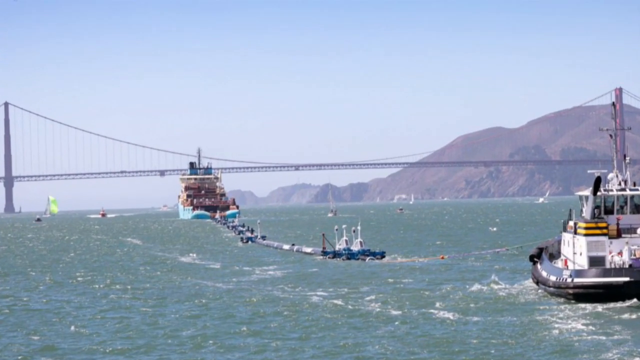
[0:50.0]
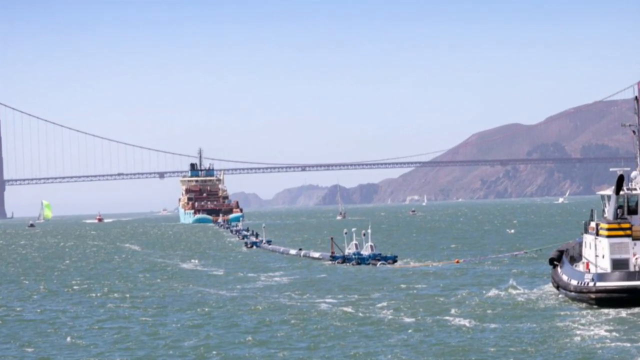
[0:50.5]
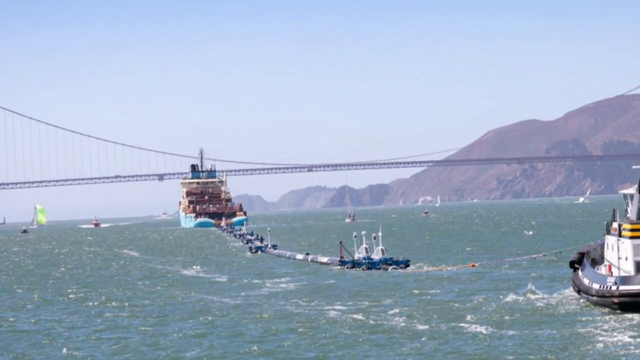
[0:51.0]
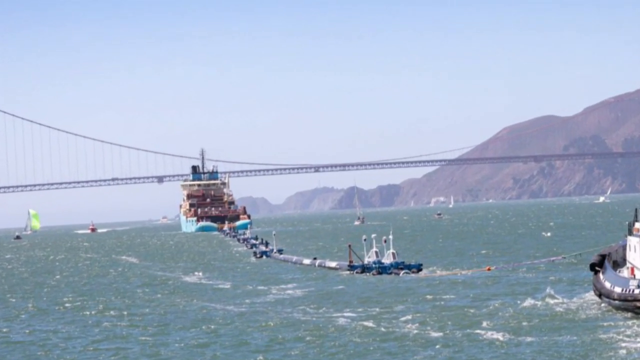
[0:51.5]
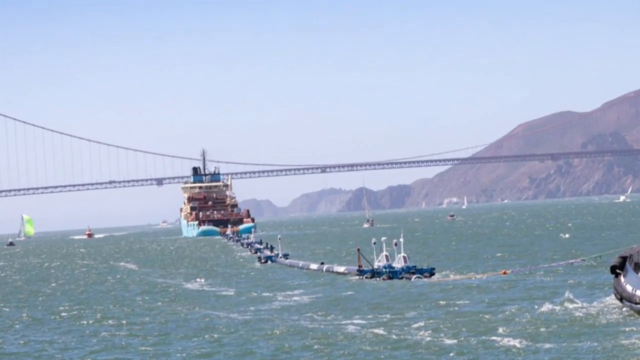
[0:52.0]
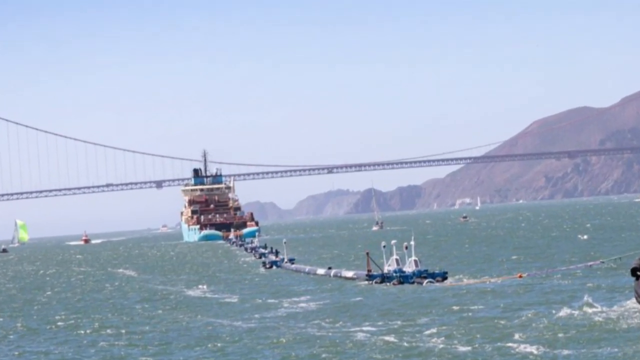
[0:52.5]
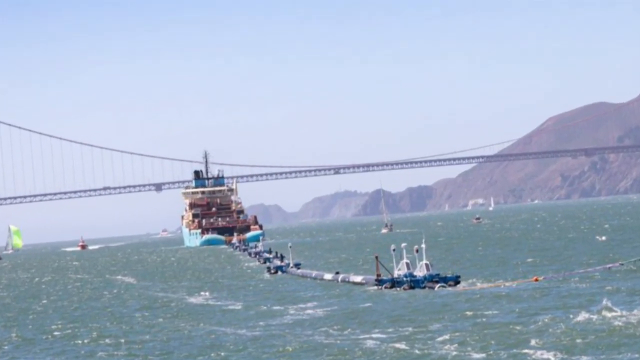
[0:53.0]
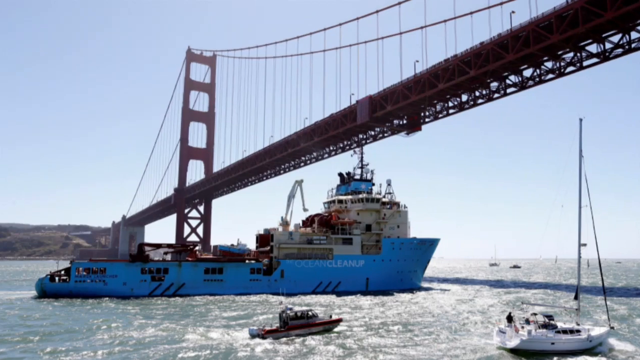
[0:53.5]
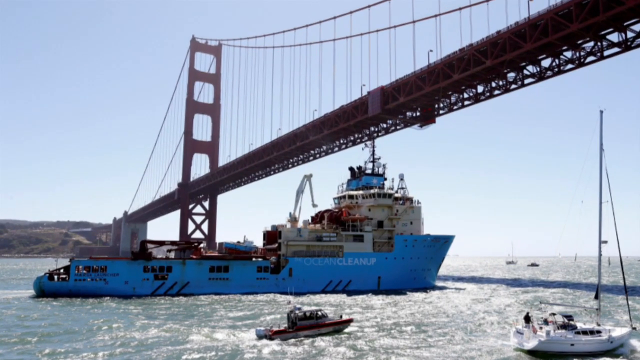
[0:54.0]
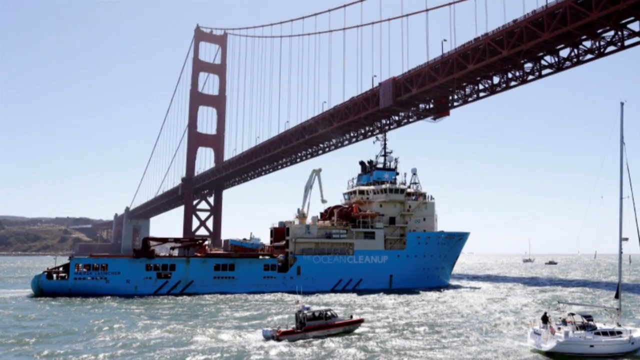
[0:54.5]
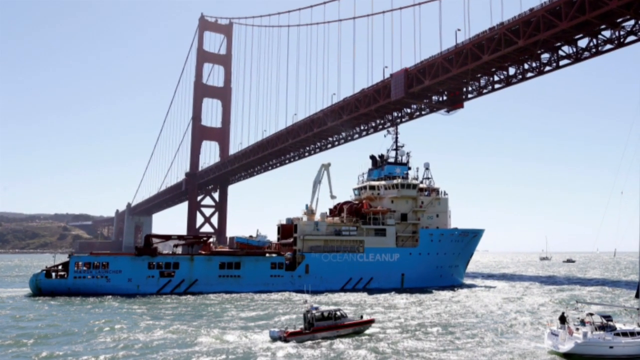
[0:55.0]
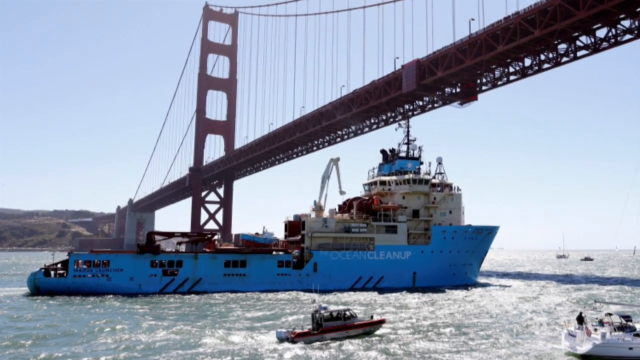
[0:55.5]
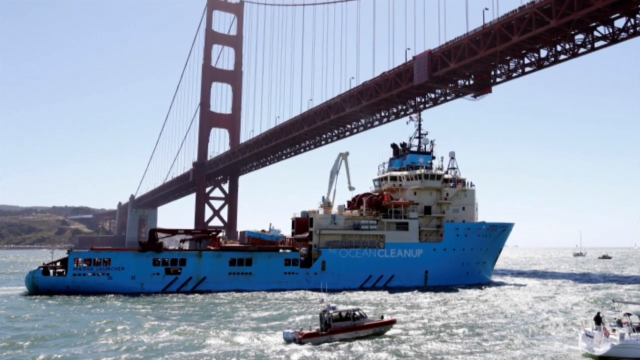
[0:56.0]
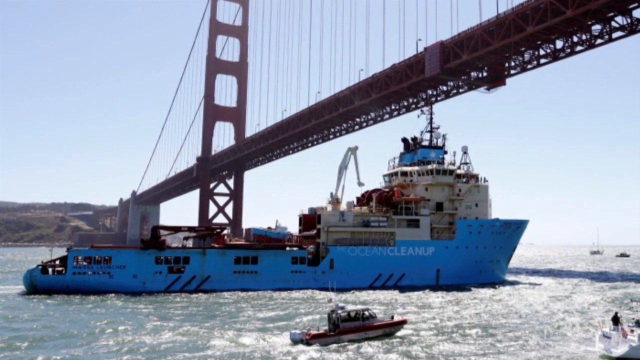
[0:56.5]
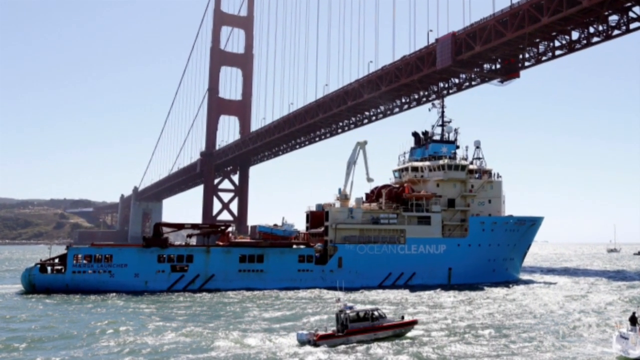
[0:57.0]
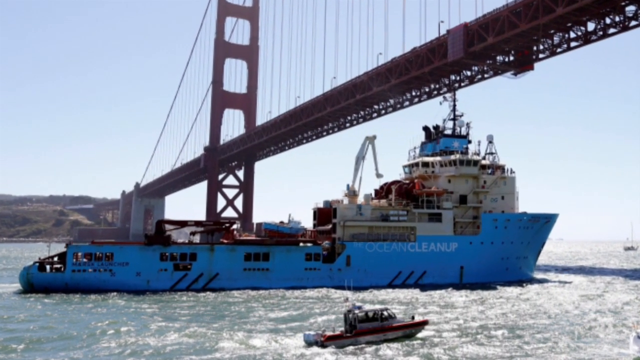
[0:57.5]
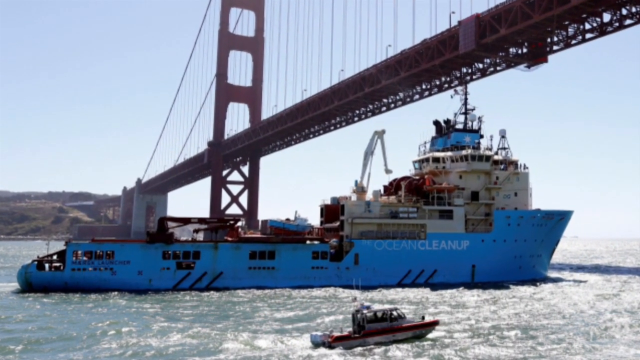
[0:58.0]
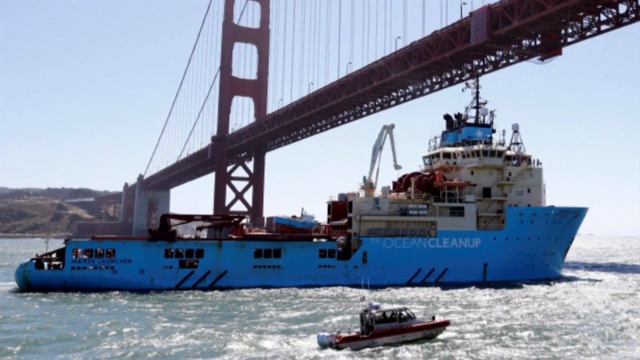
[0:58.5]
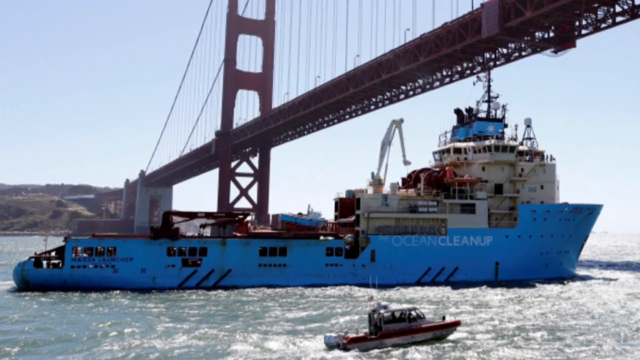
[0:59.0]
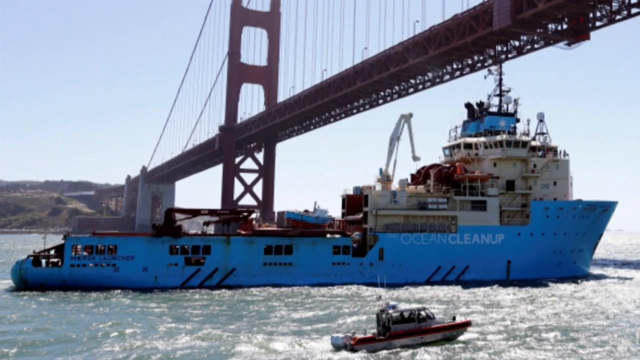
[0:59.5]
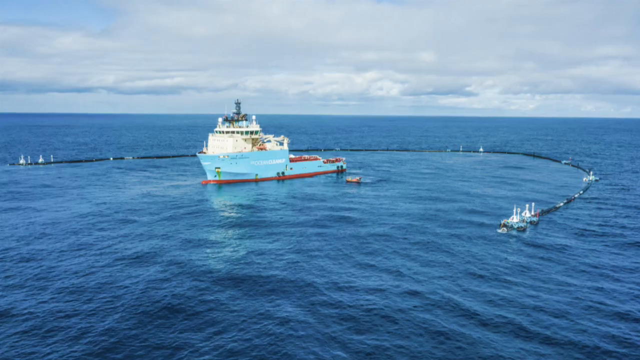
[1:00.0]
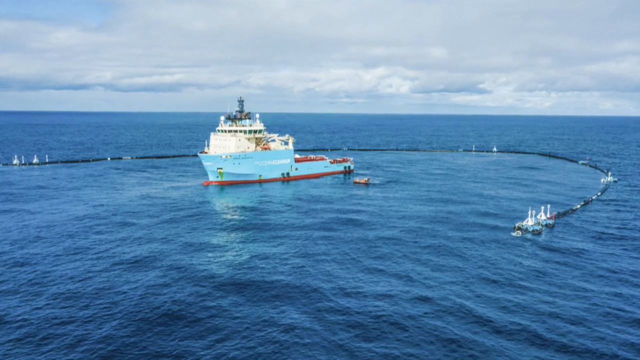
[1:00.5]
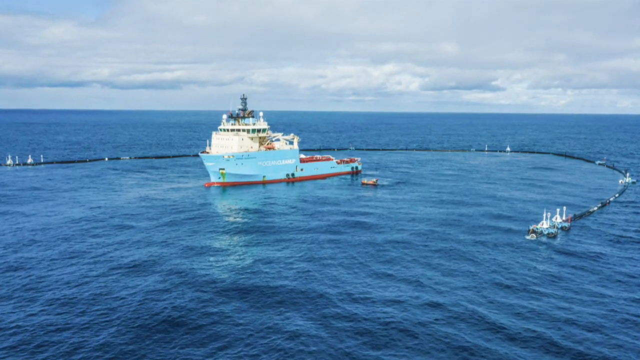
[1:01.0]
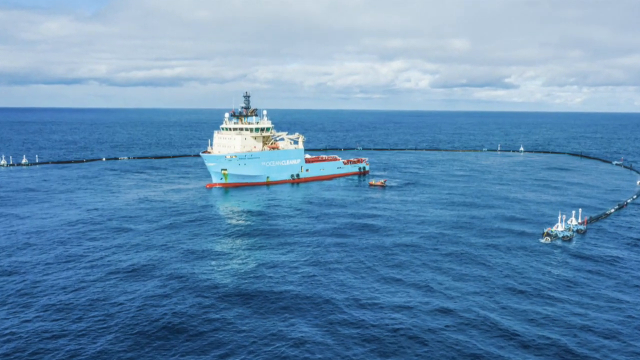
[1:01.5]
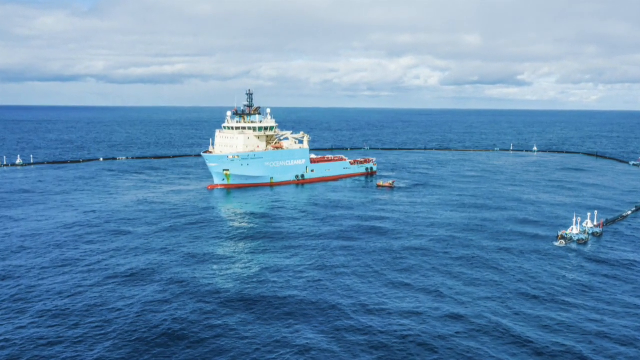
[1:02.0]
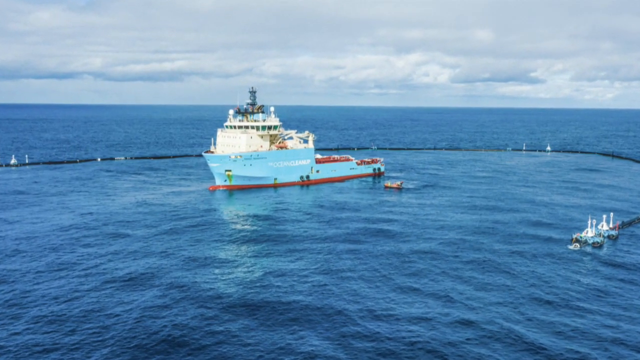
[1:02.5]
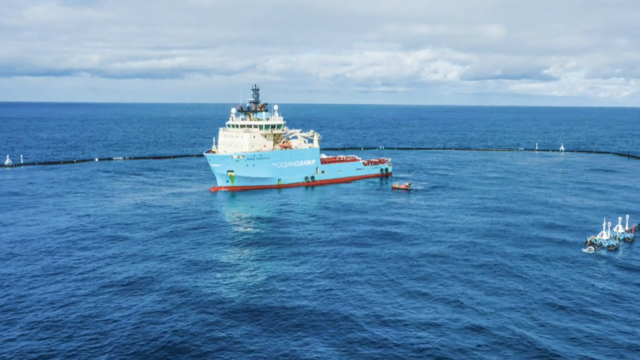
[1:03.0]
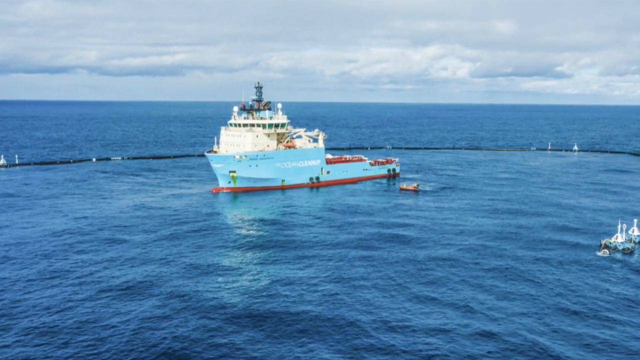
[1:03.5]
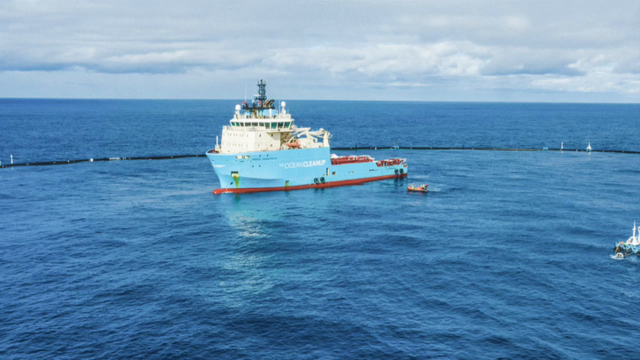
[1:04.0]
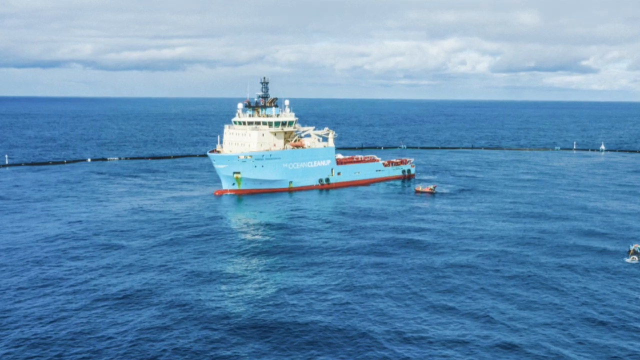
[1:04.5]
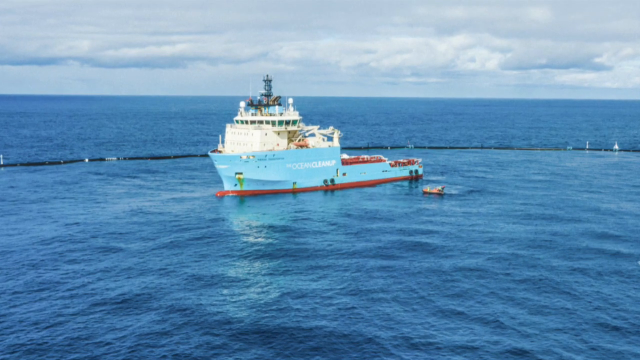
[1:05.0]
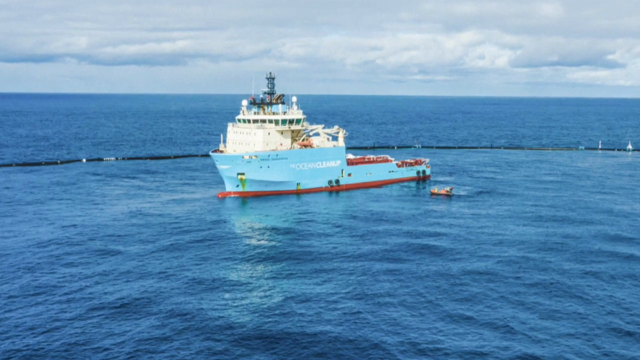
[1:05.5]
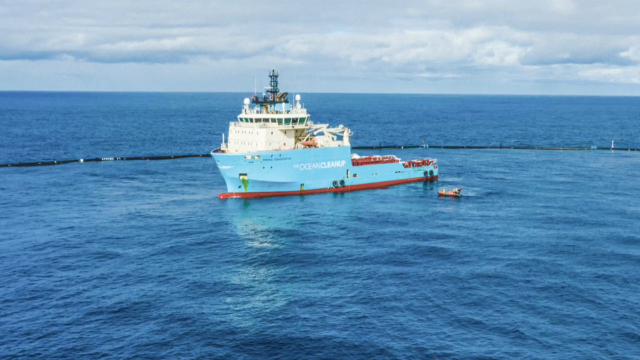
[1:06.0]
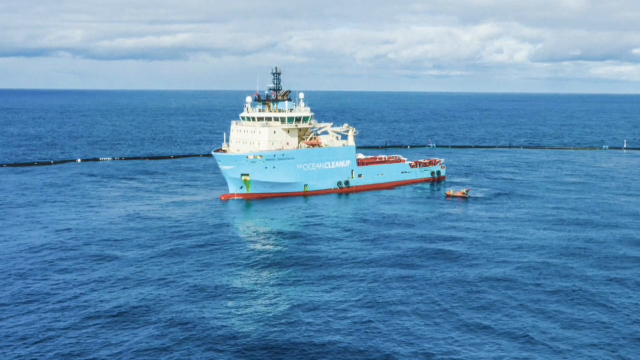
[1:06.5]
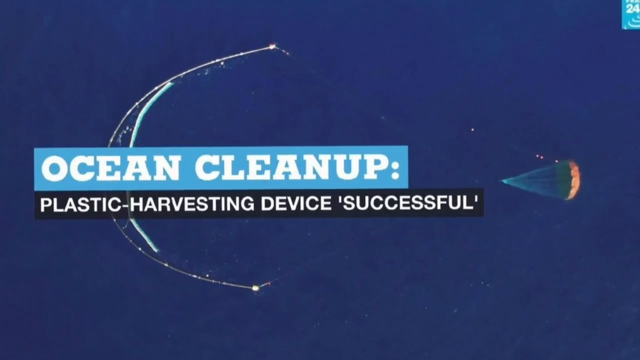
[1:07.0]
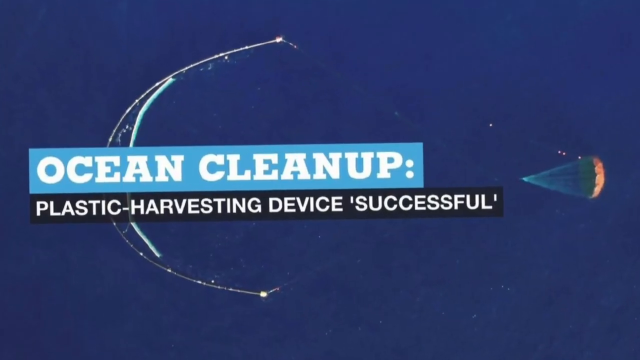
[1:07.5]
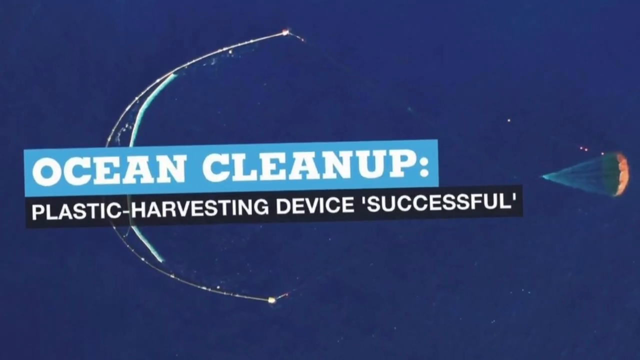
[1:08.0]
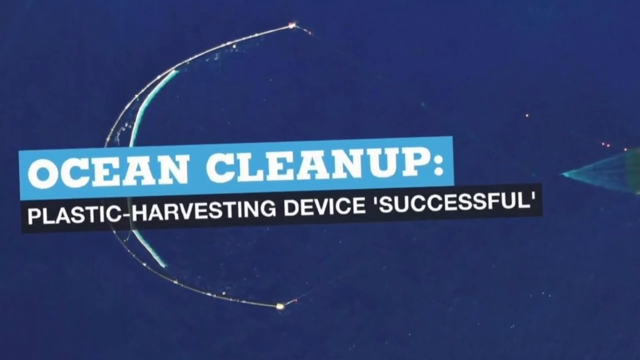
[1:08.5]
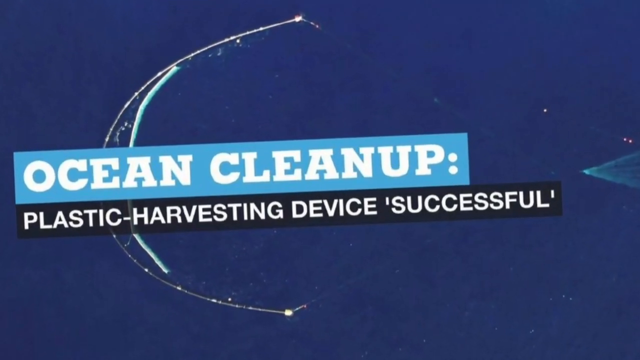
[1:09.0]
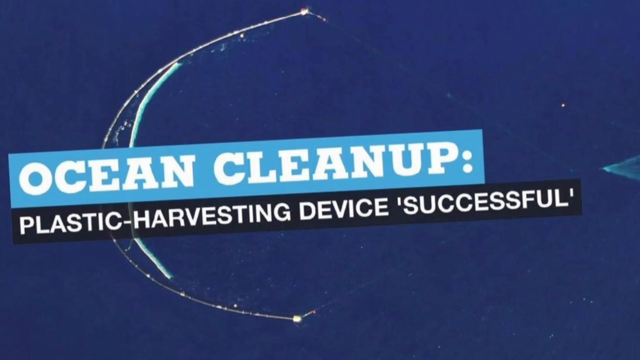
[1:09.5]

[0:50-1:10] The water appears a tranquil light blue, but also appears very rough, with waves and white foam crashing all around. A turquoise tugboat in the background is towing what looks like a blue barge. The tugboat sails away from the camera toward a bridge in the background. Further back is a large mountainside, taller and higher on the right side of the screen and lower toward the middle. A white boat, white on top and black on the bottom, enters the frame and sails from the right side of the screen to the left. The video pans in for a better view of the turquoise tugboat as it sails under the bridge. In a different view, the tugboat is out in the water, and either the water is crashing around it in a circular formation or something in the water is forming a circle around the boat. Then a navy-blue background appears with the words "ocean cleanup plastic harvesting device successful". The circle around the boat was possibly plastic.